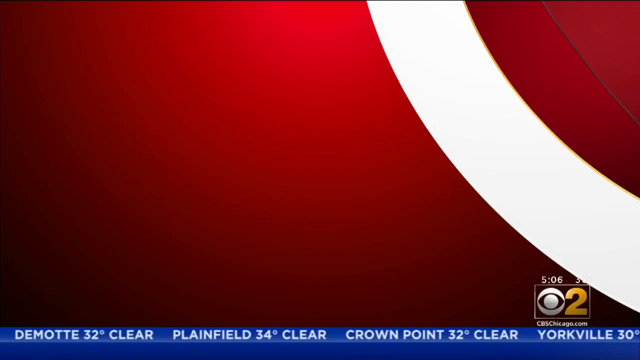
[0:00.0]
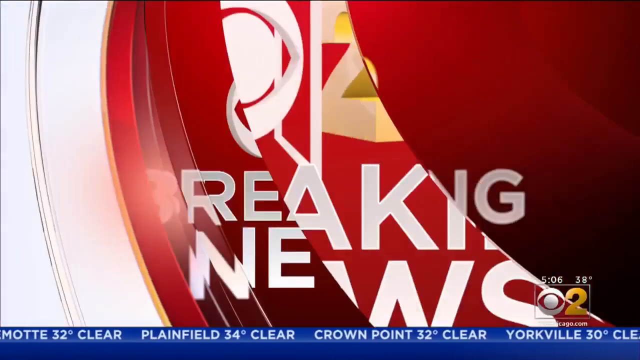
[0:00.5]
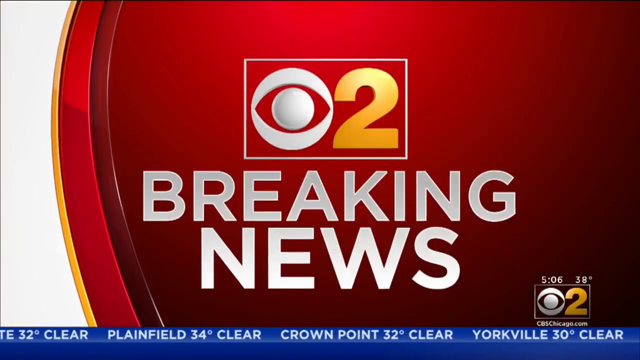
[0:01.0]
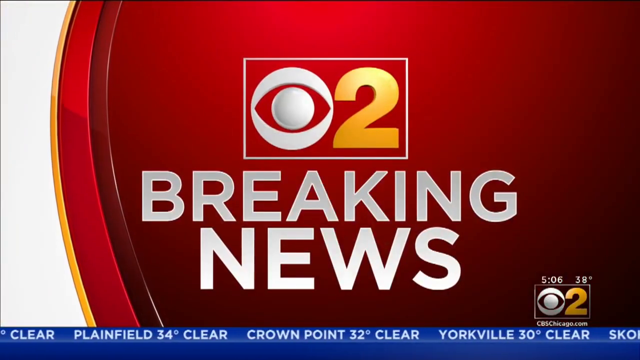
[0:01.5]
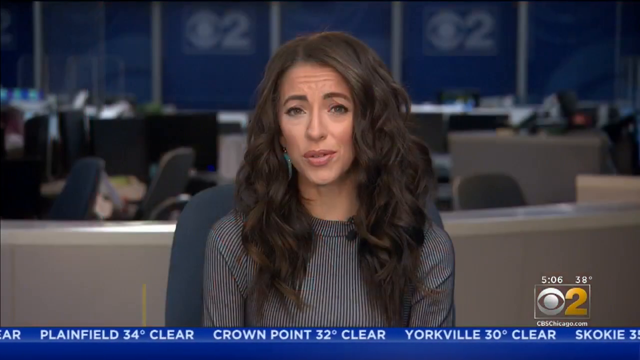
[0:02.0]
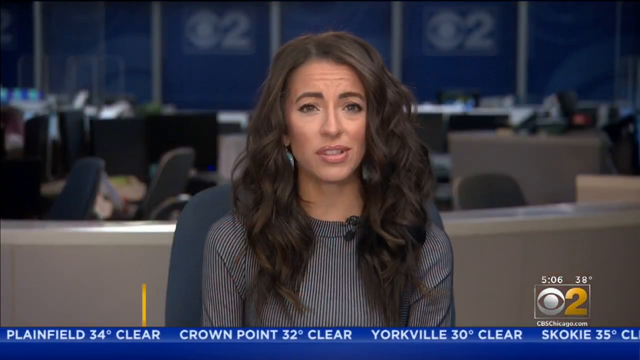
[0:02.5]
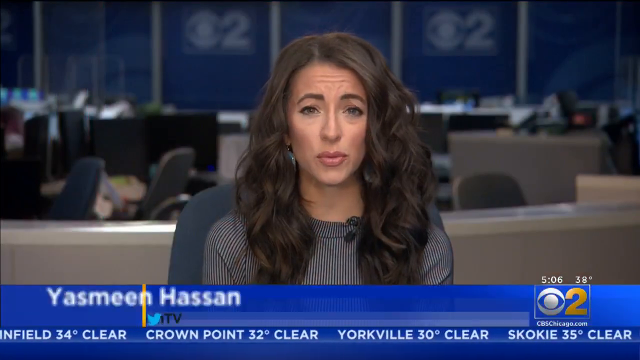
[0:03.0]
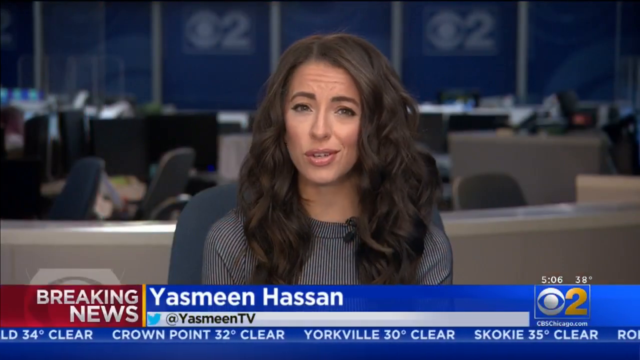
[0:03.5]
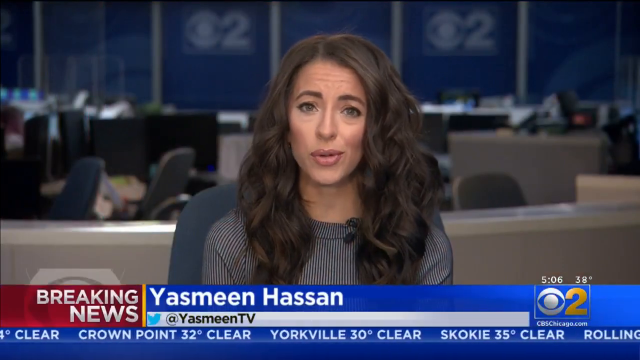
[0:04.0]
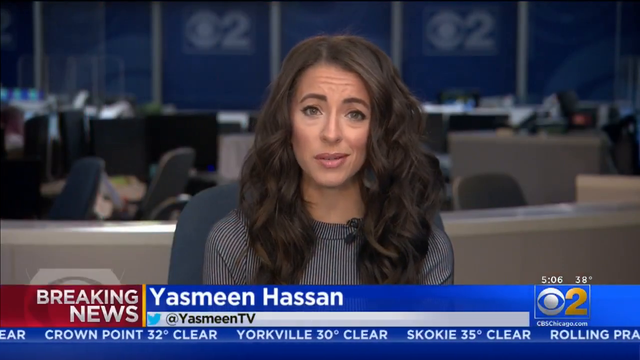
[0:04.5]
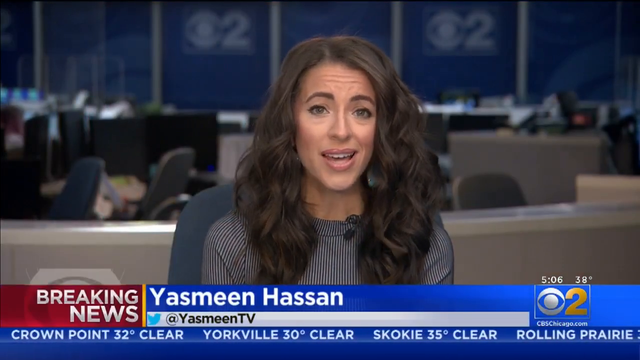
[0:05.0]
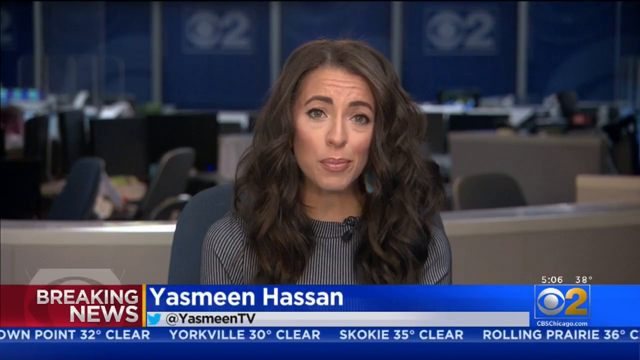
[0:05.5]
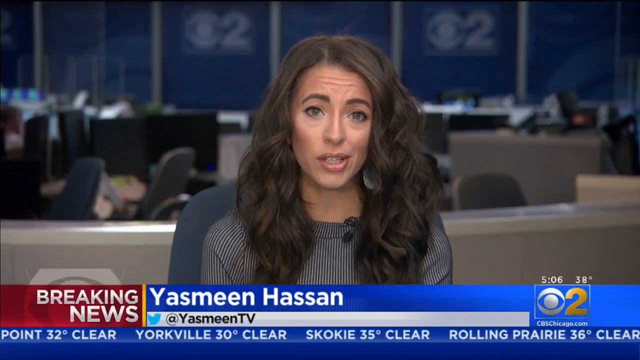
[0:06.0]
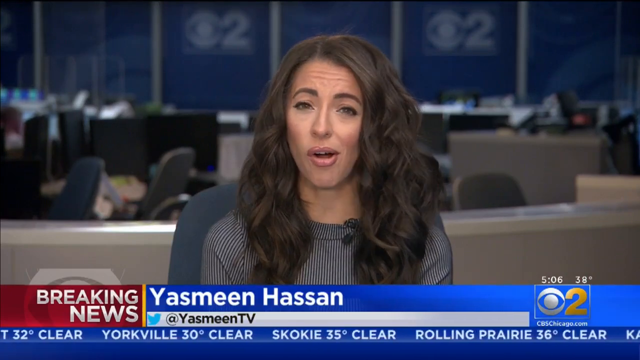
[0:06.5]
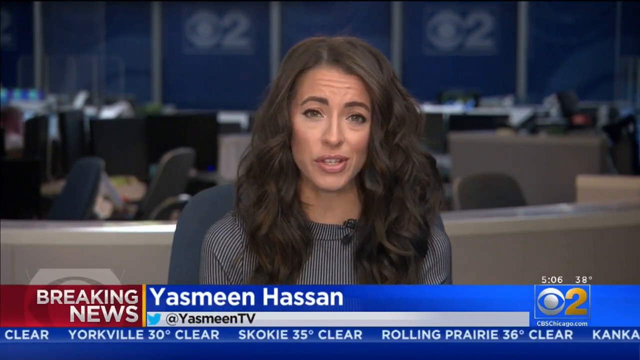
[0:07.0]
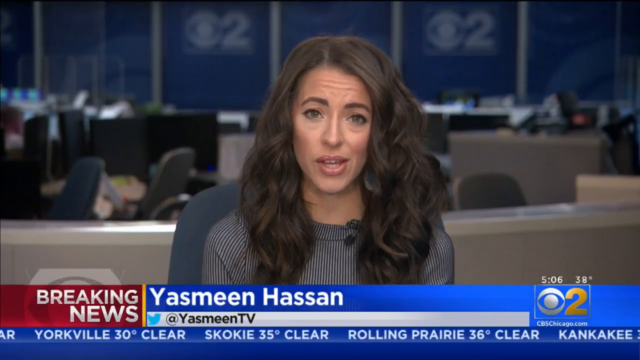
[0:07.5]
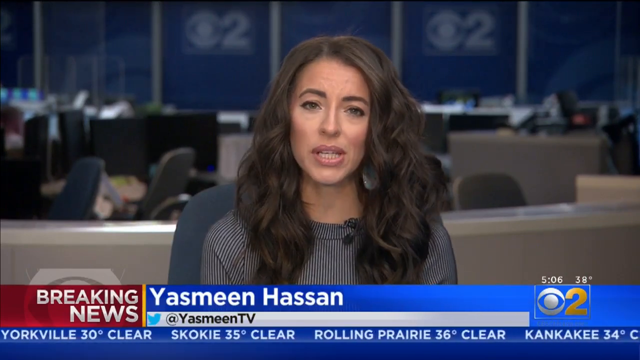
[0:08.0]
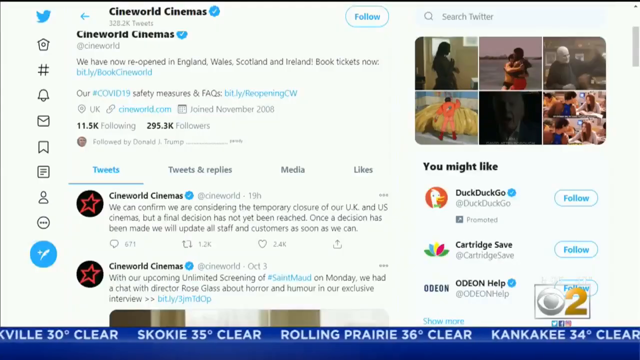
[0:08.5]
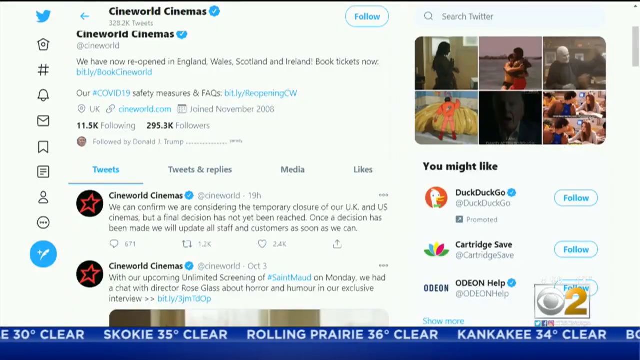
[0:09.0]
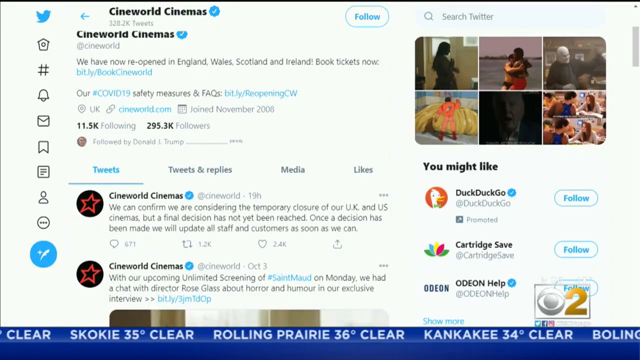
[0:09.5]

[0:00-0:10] Breaking news from the news channel O2 shows a young female news reporter named Yasmeen Hassan, an attractive young woman with long dark hair, giving a news report while sitting in a studio. It is a typical news studio with a backdrop of lots of screens and monitors, along with desks and chairs. She speaks directly to the camera about a breaking news story relating to the company Cineworld. A webpage of Cineworld is also shown; it looks like a page from a social media platform, though which platform is unclear at this point. The O2 news channel, based in Chicago, has a red coloured backdrop as its company logo.